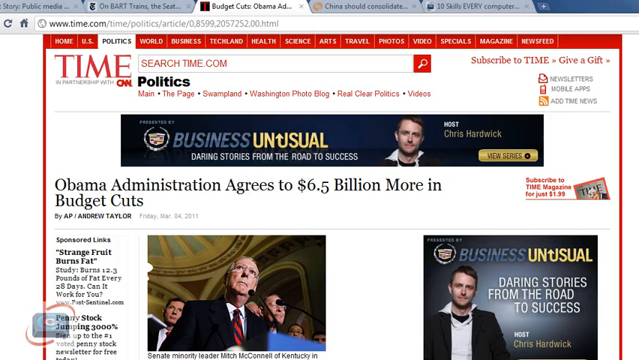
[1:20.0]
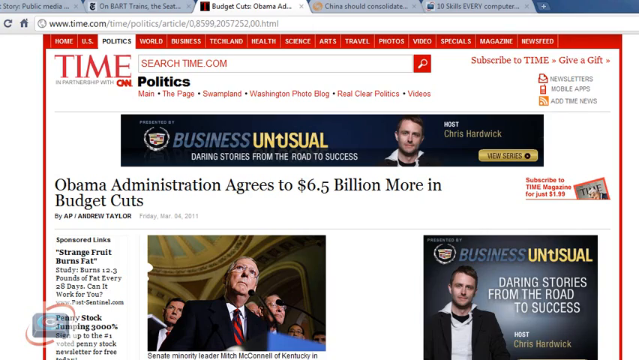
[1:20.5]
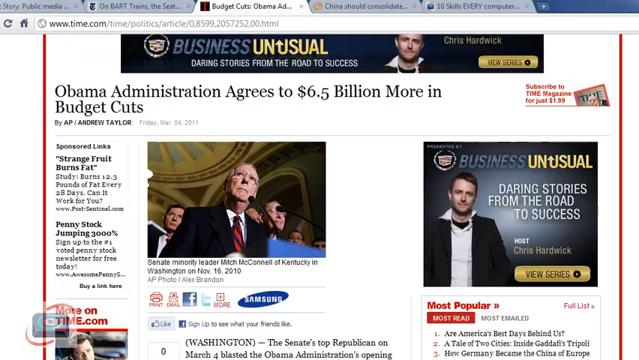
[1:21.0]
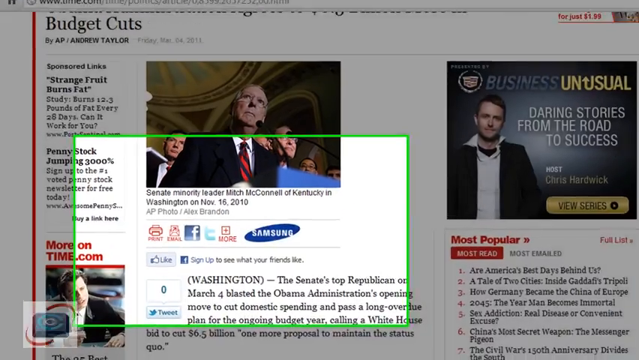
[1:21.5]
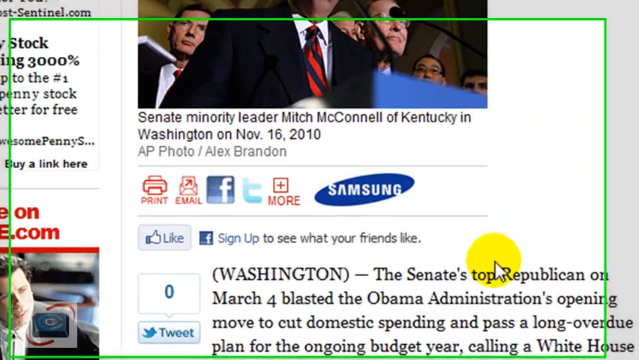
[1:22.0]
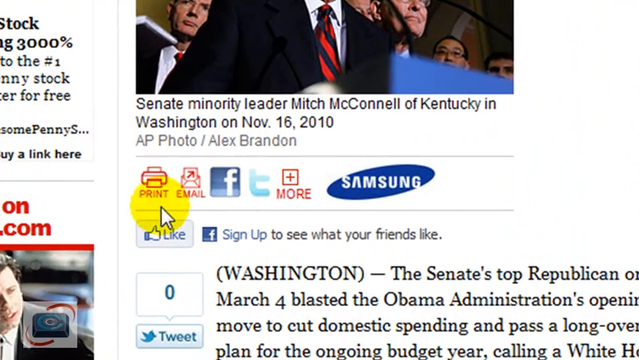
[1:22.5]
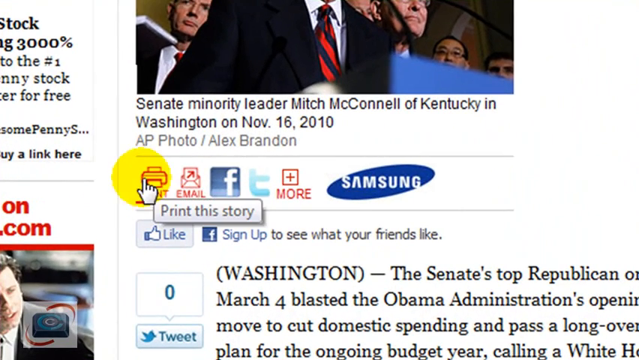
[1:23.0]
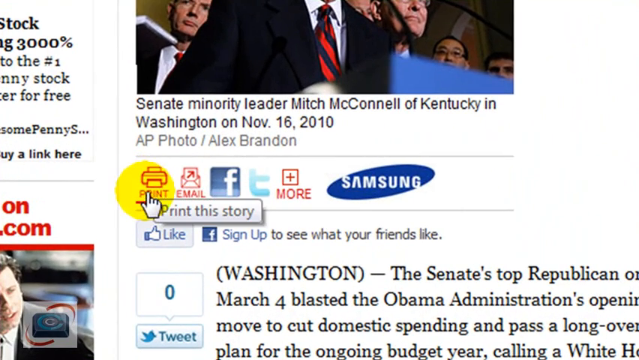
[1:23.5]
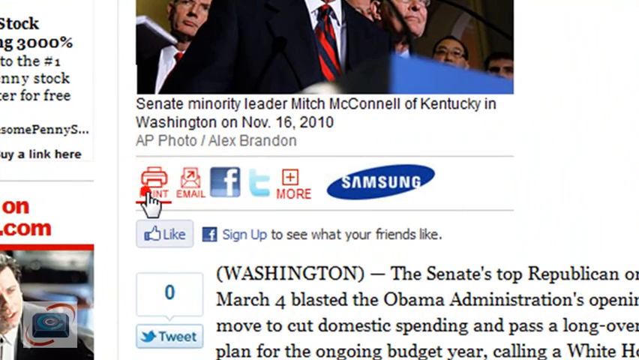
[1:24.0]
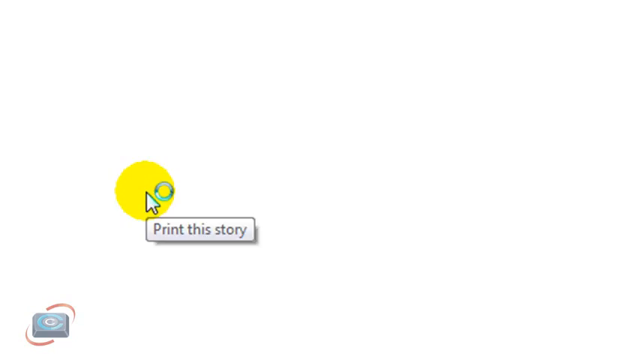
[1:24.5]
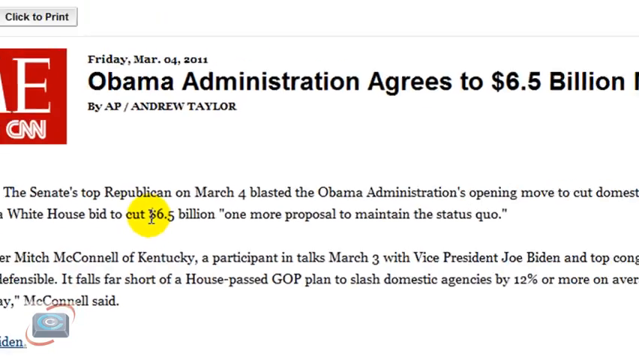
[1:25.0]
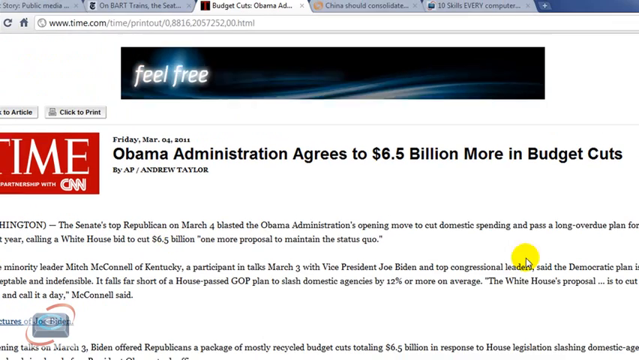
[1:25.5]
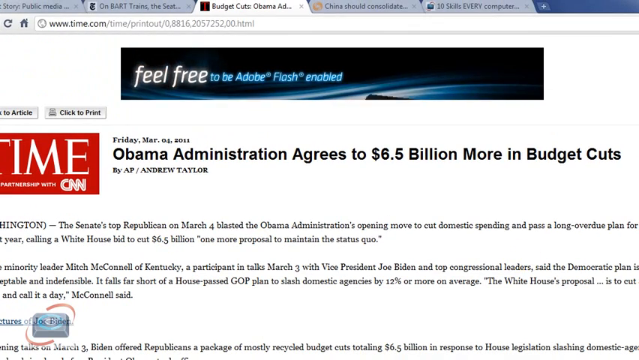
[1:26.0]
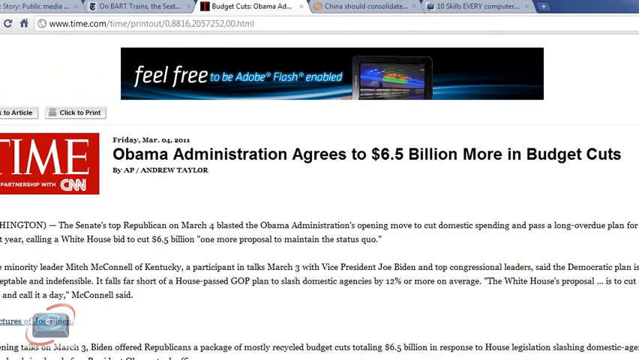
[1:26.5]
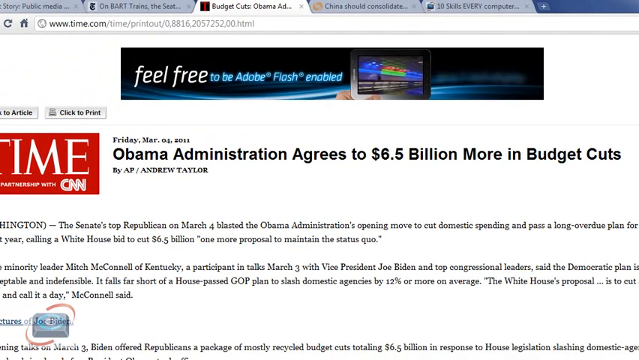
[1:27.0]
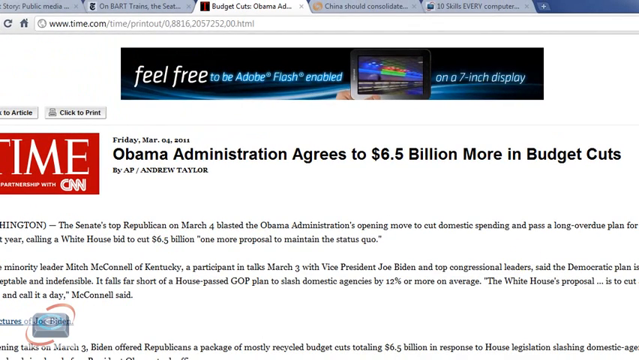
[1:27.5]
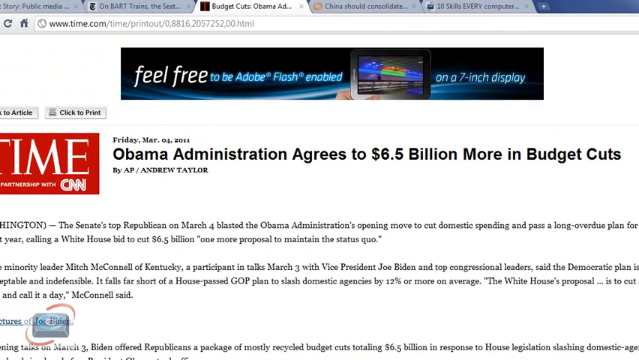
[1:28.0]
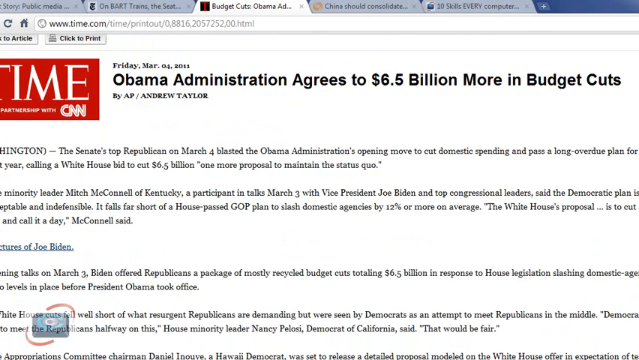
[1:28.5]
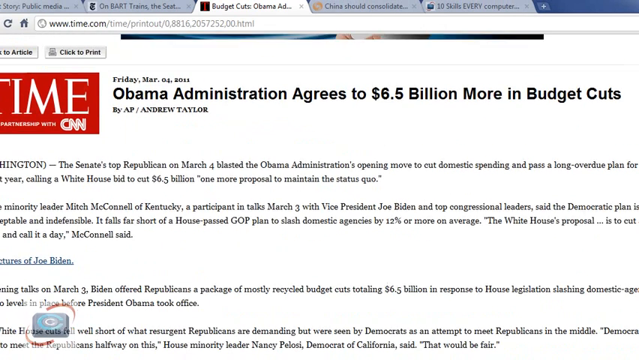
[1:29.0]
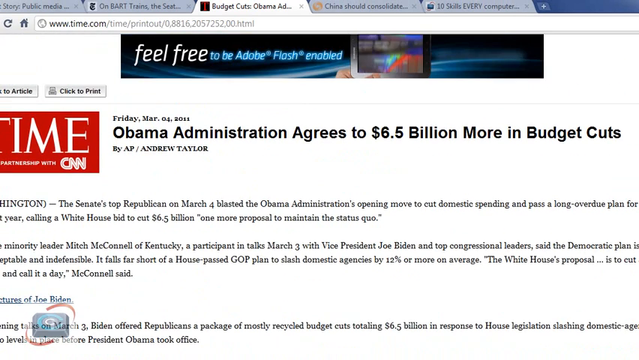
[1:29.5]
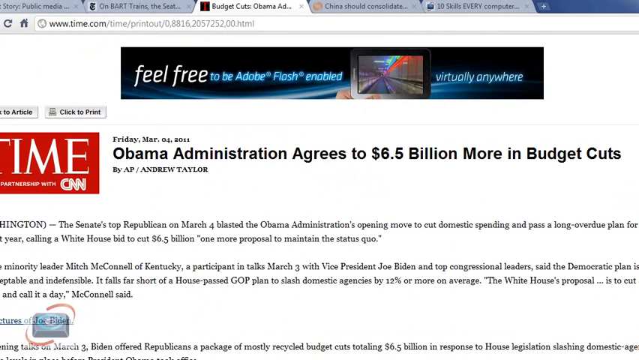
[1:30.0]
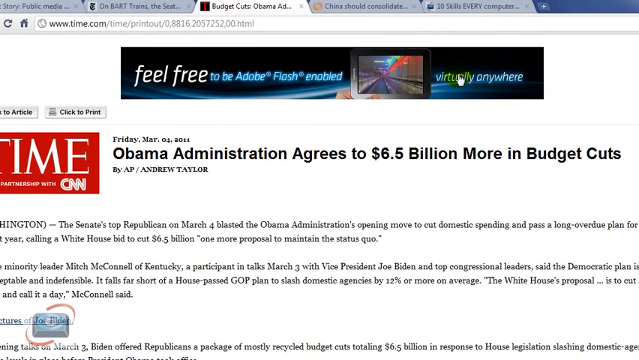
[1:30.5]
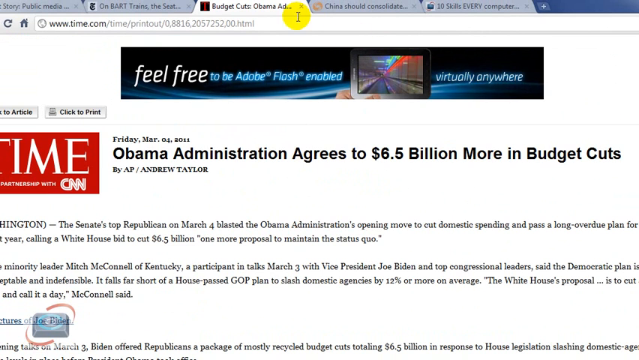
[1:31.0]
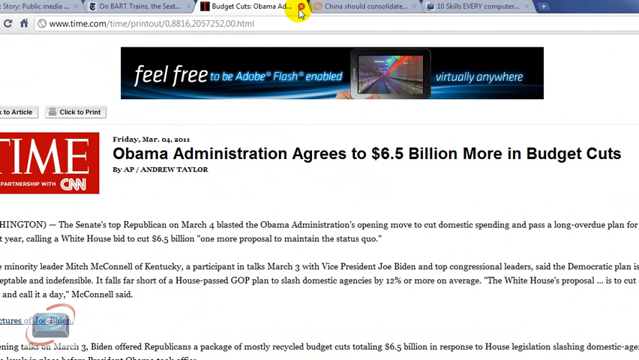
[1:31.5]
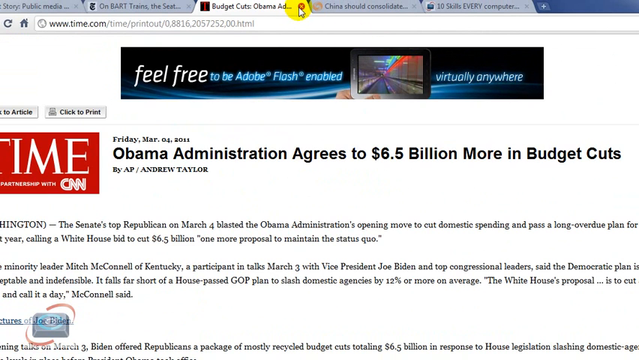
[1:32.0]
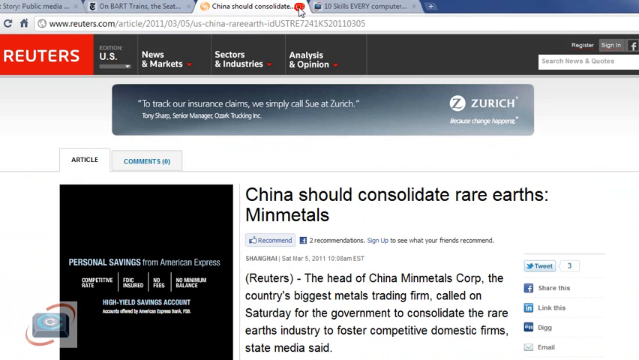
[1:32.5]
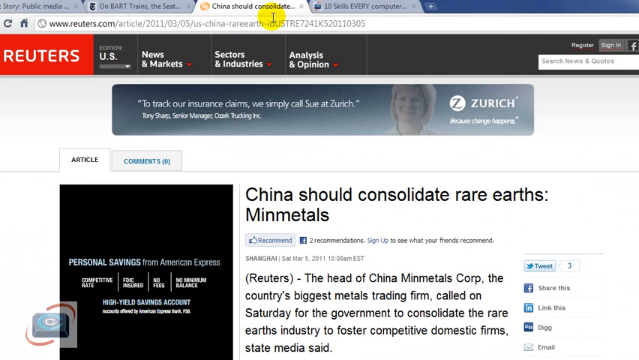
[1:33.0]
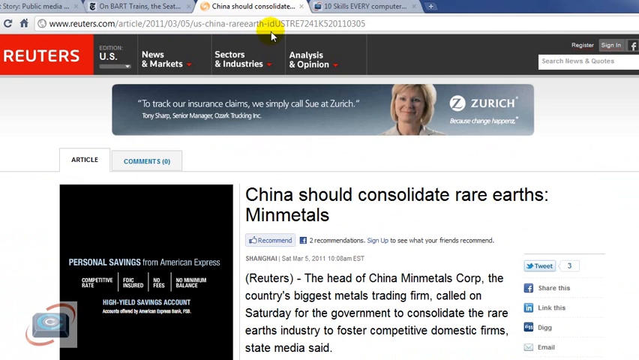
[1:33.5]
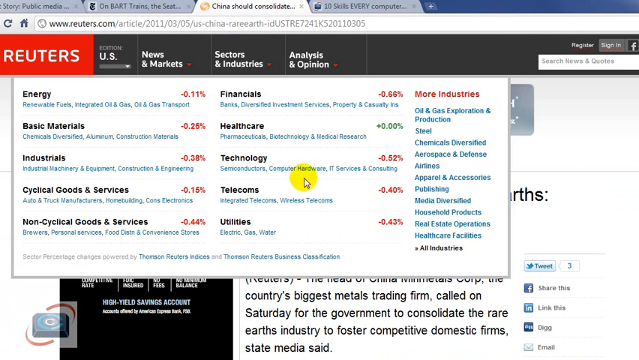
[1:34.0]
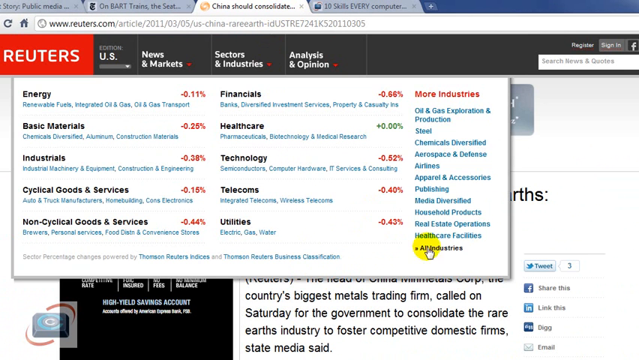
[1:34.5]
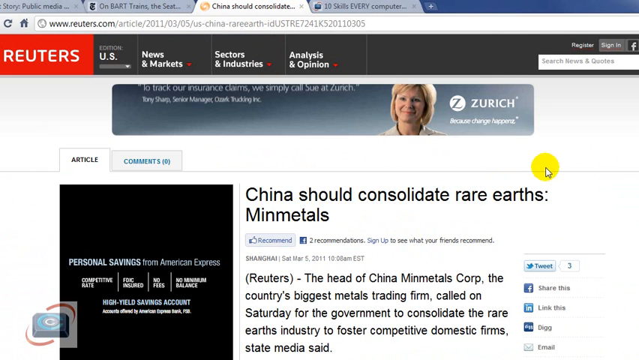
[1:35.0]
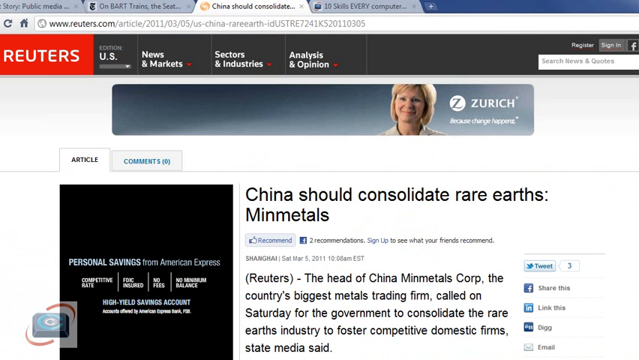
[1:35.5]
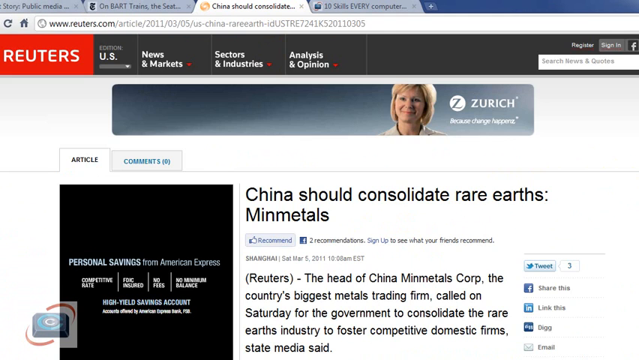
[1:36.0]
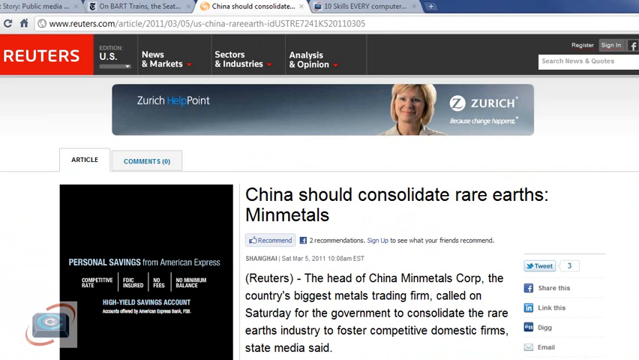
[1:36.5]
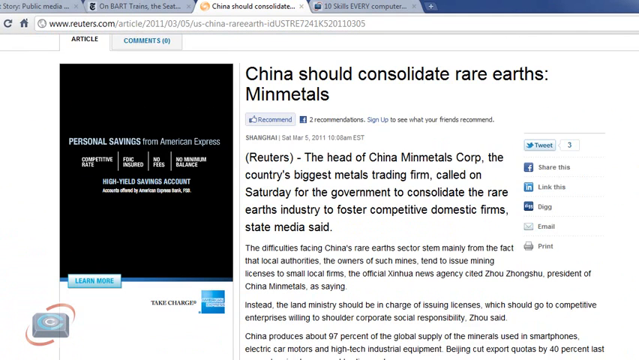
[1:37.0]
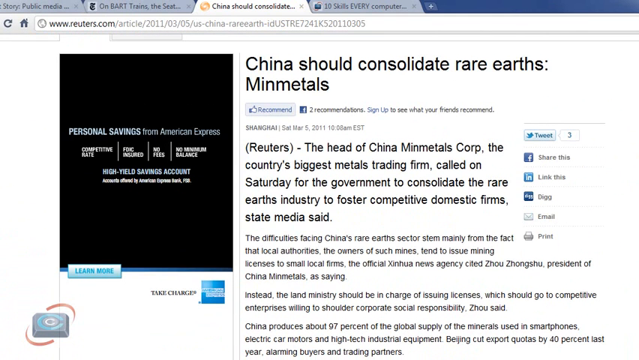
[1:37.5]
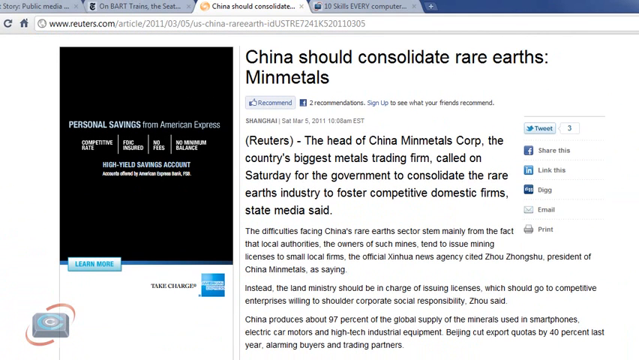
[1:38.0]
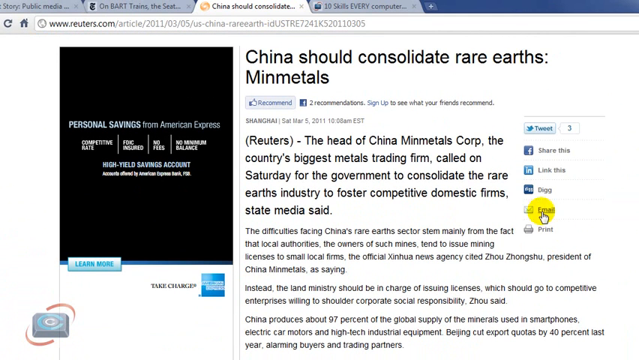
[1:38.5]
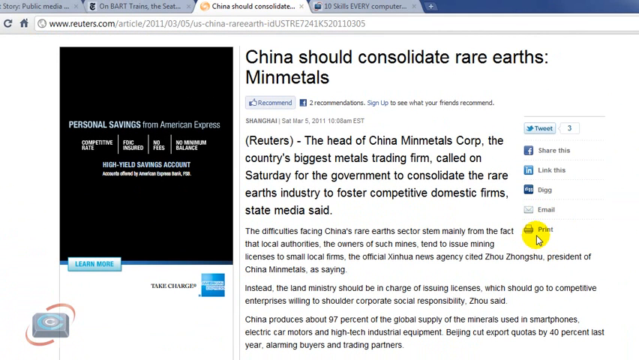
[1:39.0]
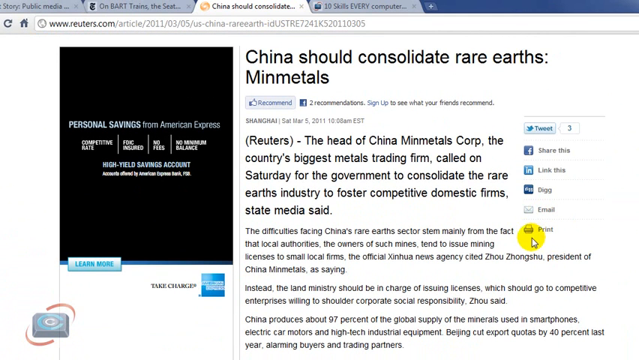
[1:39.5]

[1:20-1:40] A very colorful Time magazine page has a pop-up reading "Business Unusual" at the top. A person works the cursor, which is circled in a big yellow circle, moving it randomly around the page and clicking print. A page reads "Obama Administration Agrees to 6.5 Billion More in Budget Cuts". The person scrolls up the page to the browser, a pop-up appears, and they scroll down and click print again. Near the print button are other options: email, facebook, Twitter and a "more+" button. The cursor moves around the Time website again, showing highlights, apparently what was clicked to reach the Obama article about budget cuts.